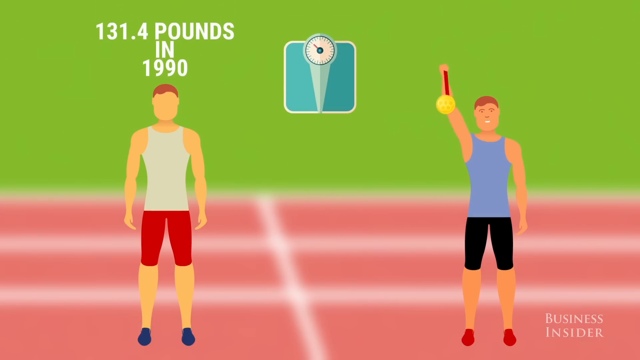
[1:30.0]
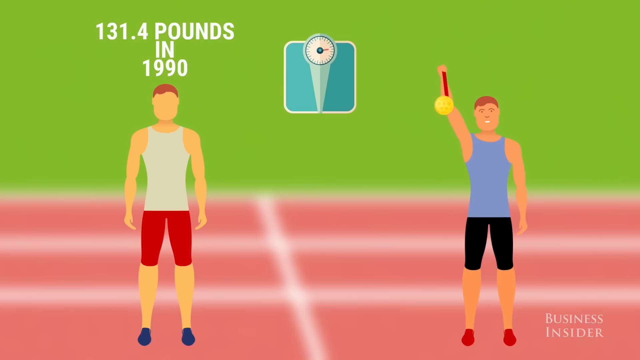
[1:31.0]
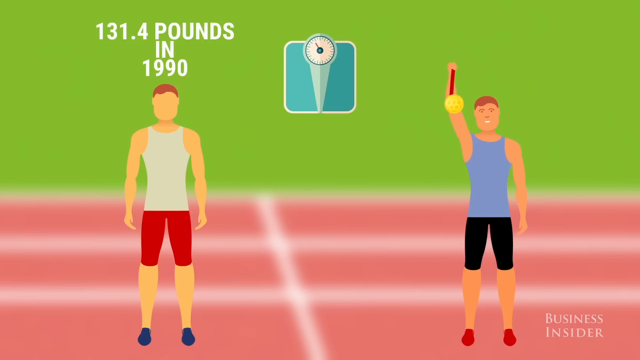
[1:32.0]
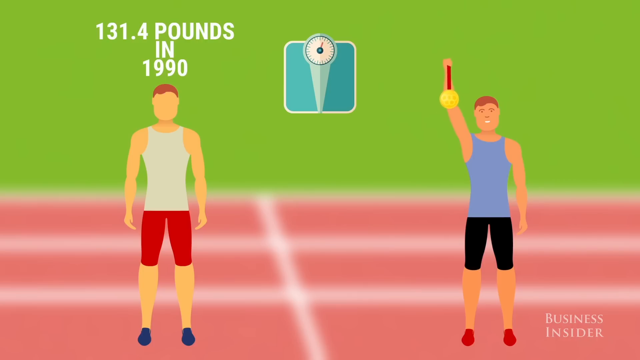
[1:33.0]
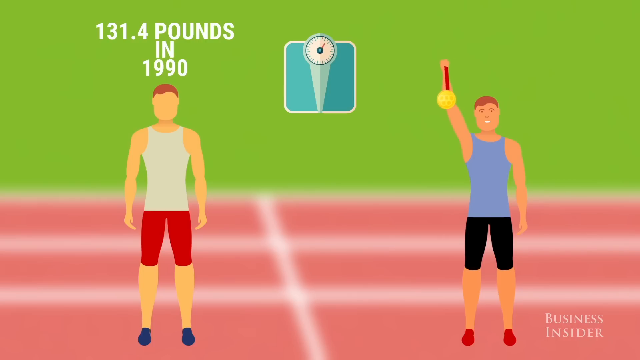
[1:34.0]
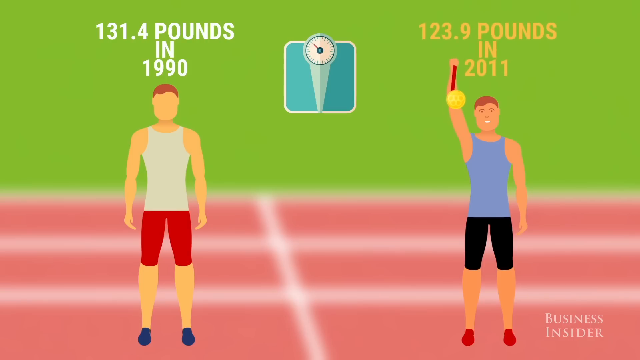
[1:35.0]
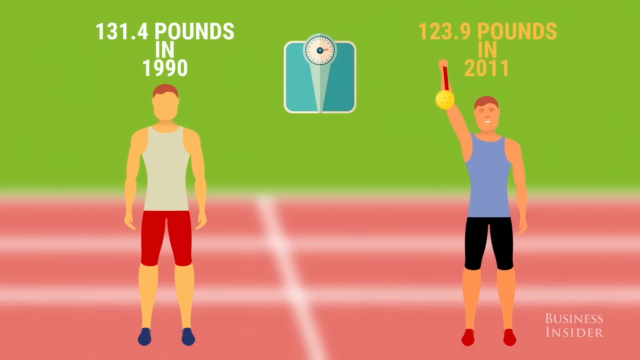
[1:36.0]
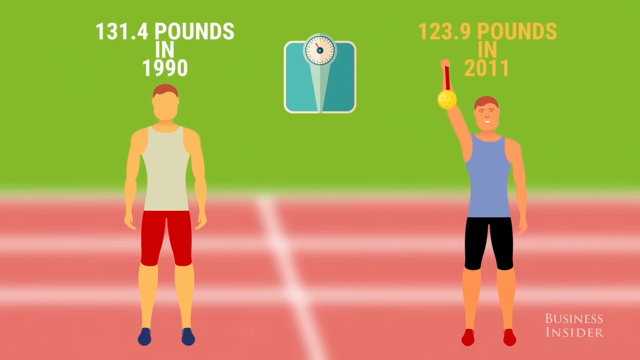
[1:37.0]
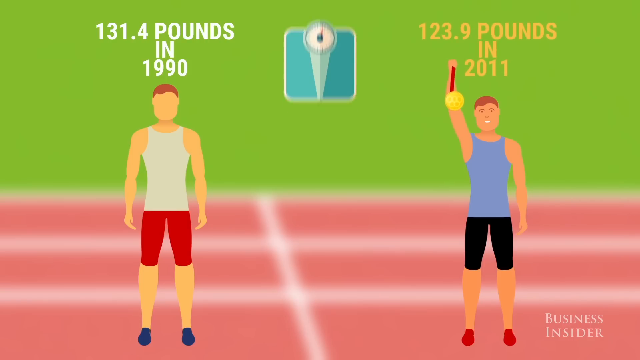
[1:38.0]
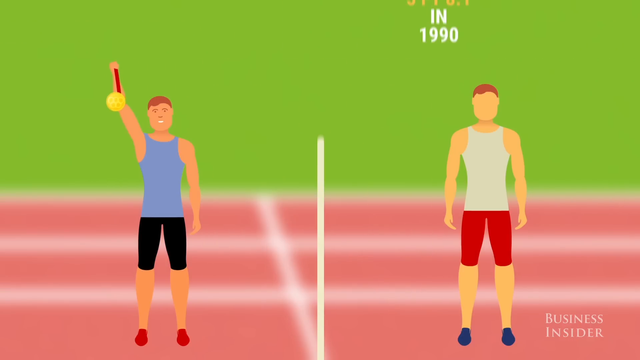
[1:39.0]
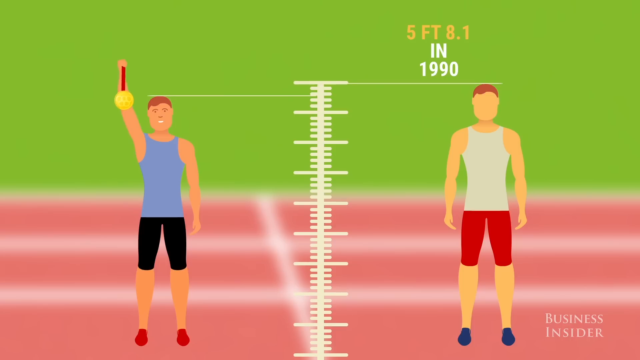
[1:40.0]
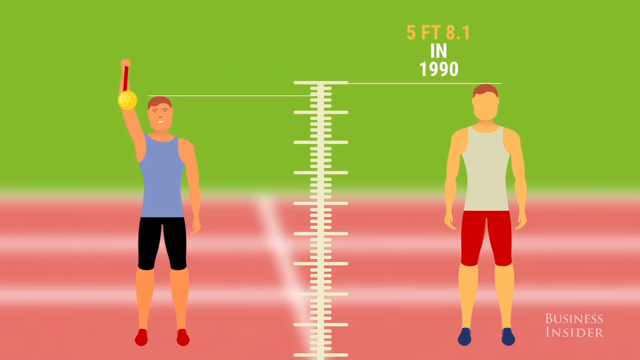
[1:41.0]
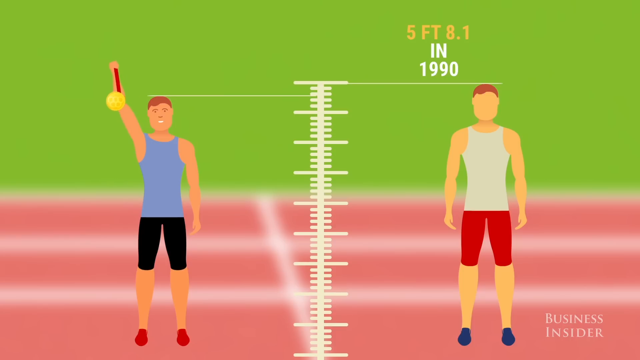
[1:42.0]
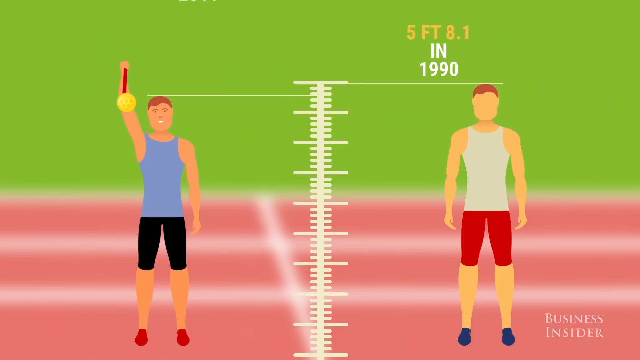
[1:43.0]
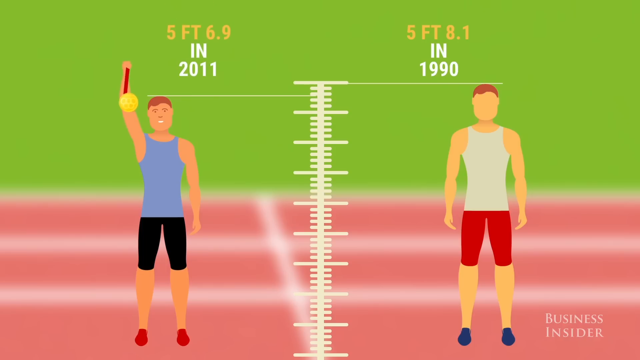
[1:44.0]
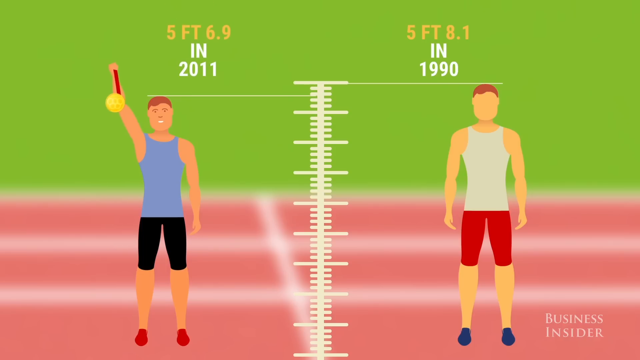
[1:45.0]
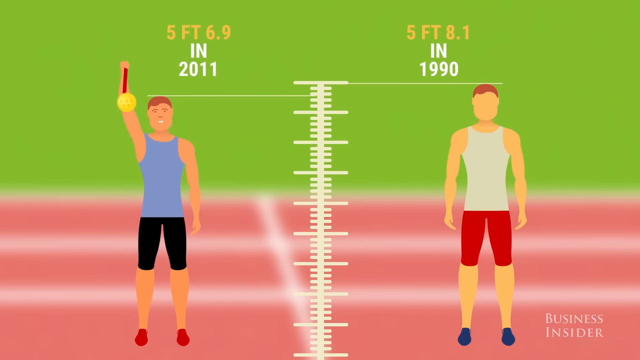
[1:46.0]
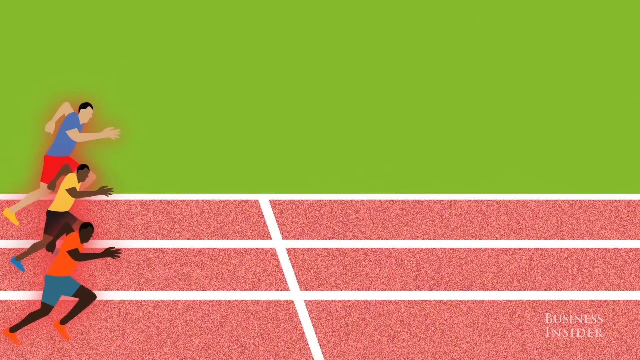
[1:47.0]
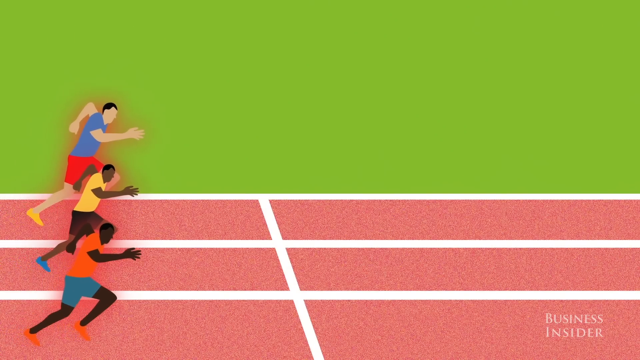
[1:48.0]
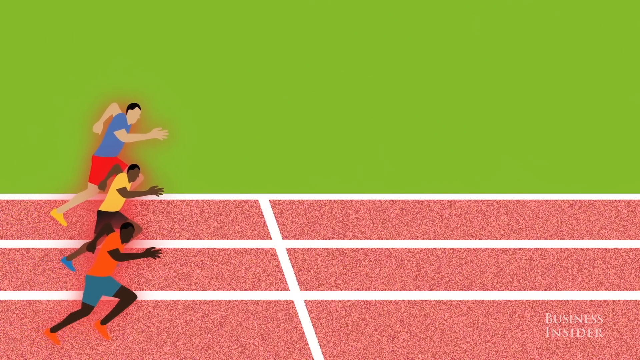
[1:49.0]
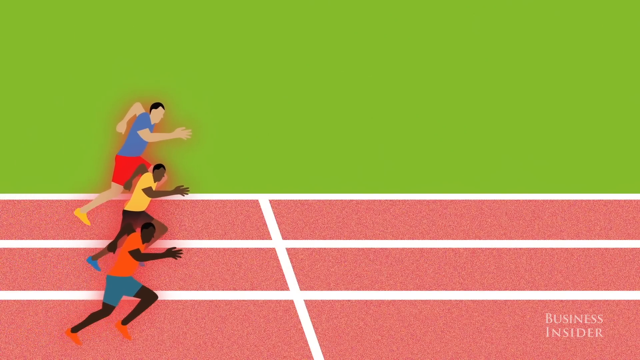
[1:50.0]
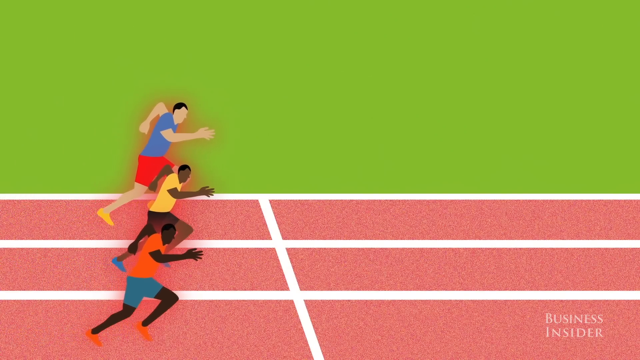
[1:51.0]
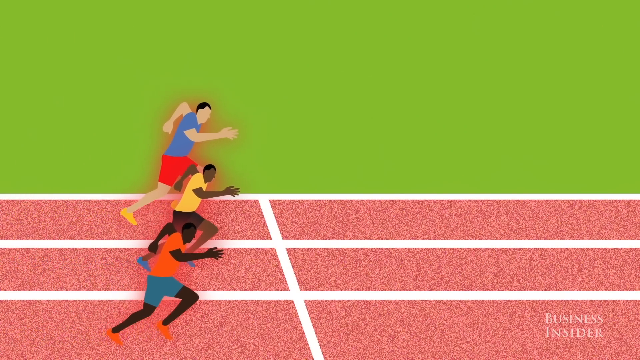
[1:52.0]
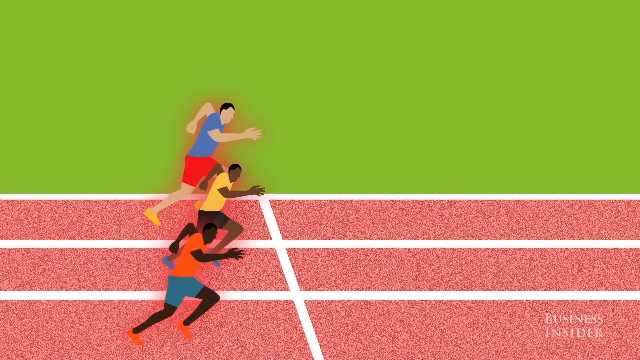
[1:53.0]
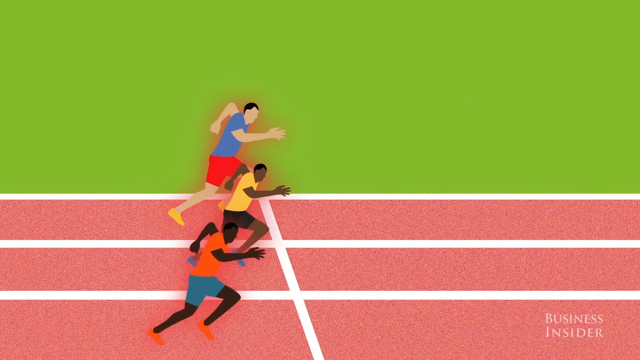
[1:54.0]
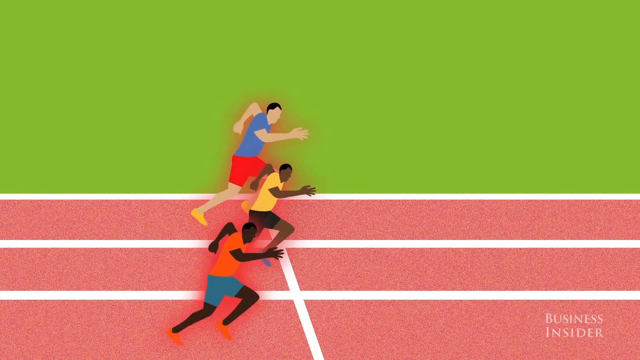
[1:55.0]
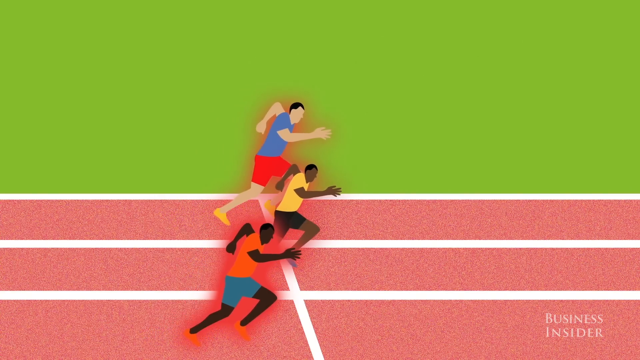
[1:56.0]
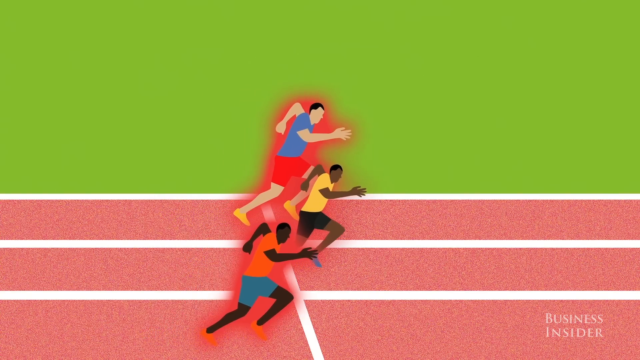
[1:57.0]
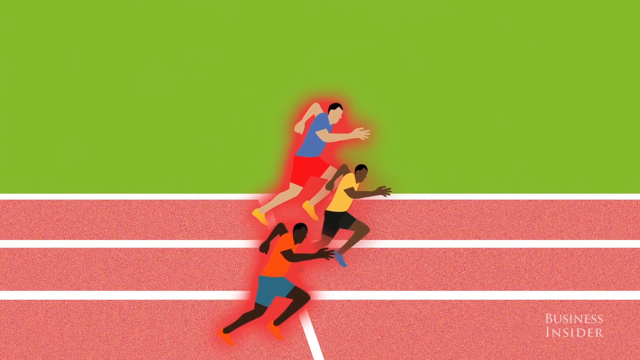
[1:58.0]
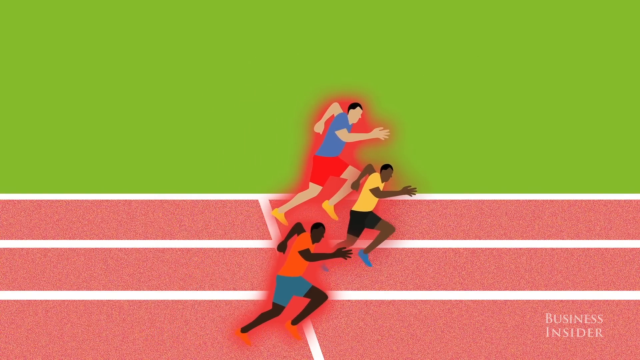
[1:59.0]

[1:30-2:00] Two animated runners are shown, one holding a gold medal, with a scale in the middle of them. The first man weighs 131.4 pounds in 1990, and the man holding the gold medal weighs 123.9 pounds in 2011. The first man's height is 5 foot 8.1 in 1990, and the man holding the gold medal is 5 foot 6.9 inches in 2011. Three small animated men then run across a finish line in very slow motion. "Business Insider" appears at the bottom of the screen.